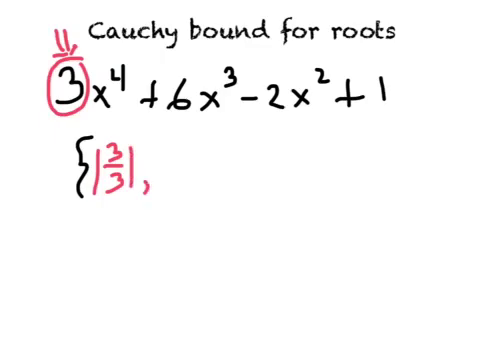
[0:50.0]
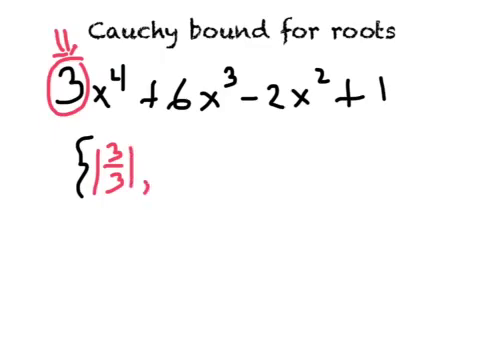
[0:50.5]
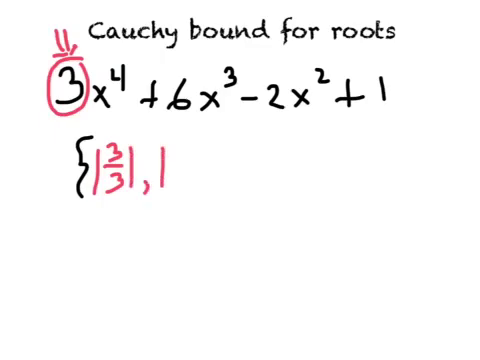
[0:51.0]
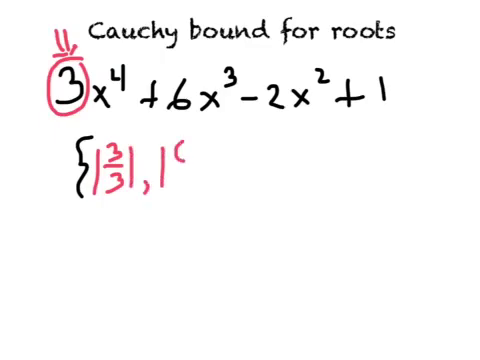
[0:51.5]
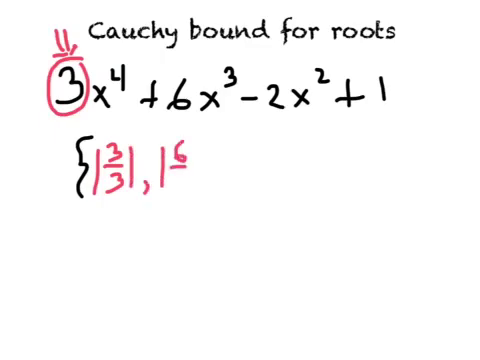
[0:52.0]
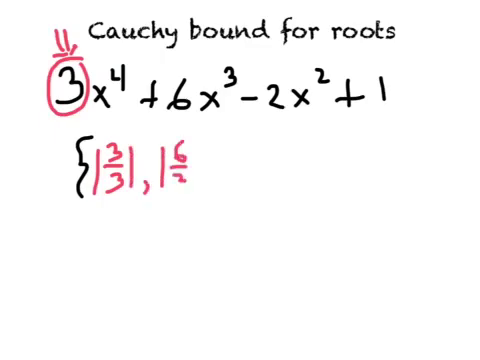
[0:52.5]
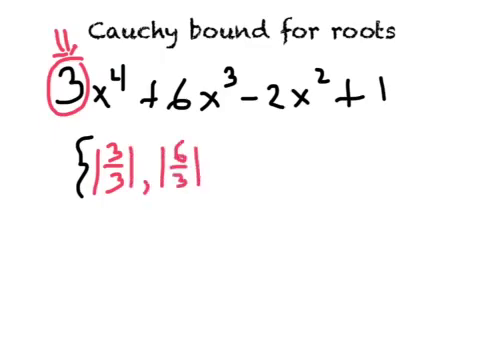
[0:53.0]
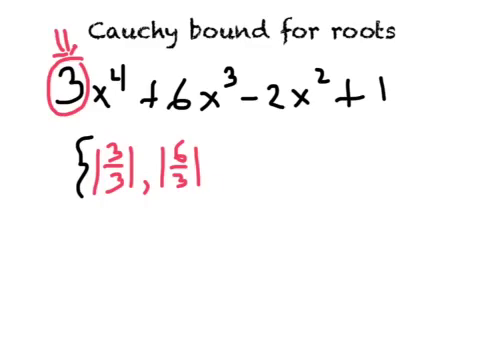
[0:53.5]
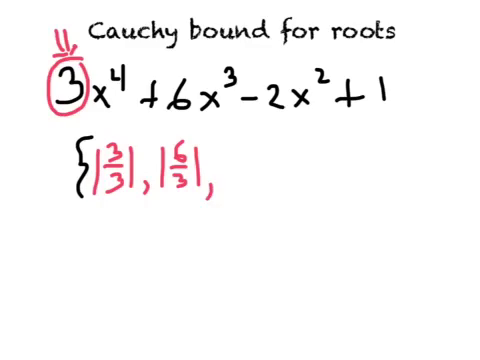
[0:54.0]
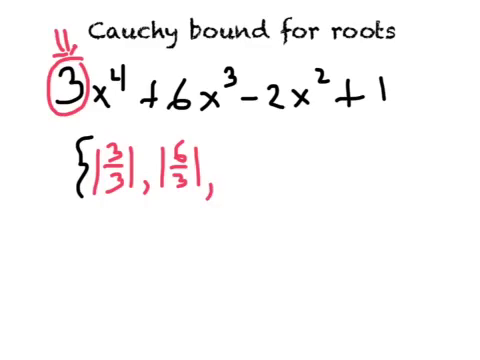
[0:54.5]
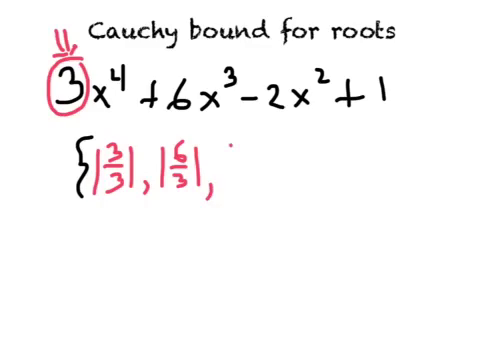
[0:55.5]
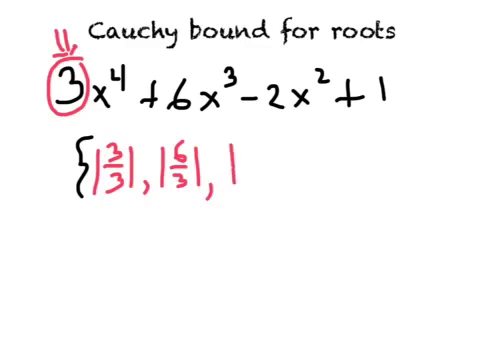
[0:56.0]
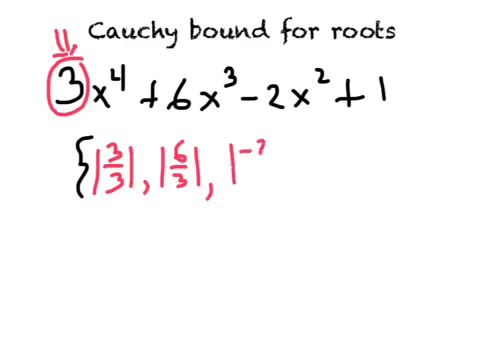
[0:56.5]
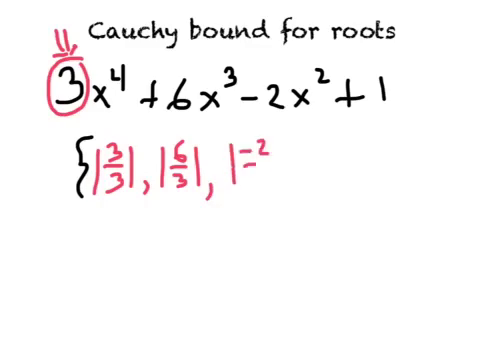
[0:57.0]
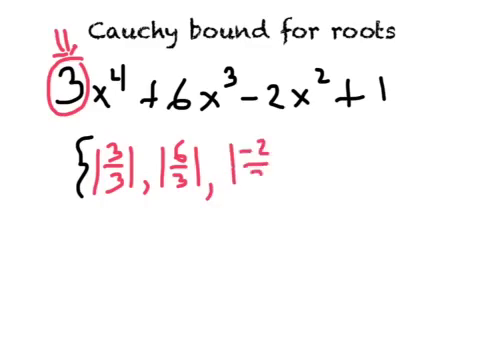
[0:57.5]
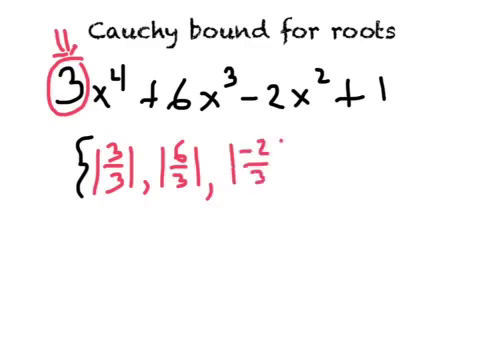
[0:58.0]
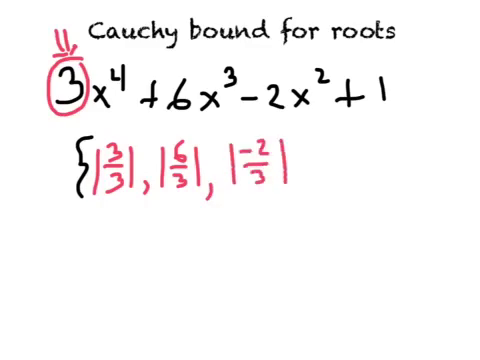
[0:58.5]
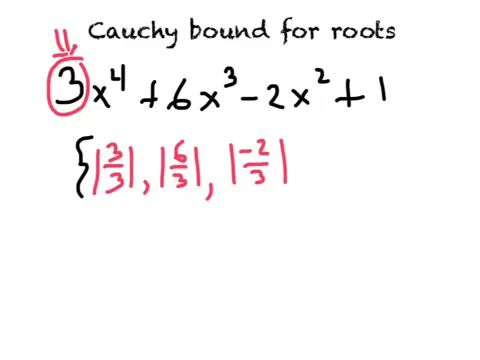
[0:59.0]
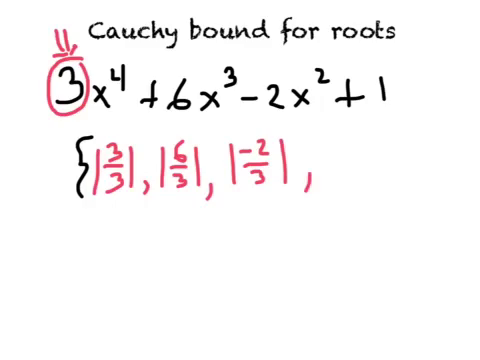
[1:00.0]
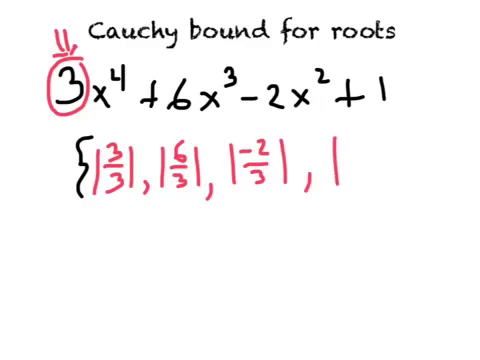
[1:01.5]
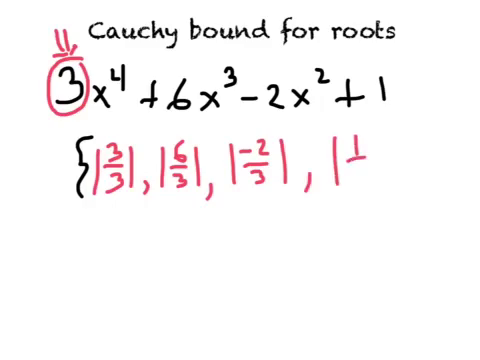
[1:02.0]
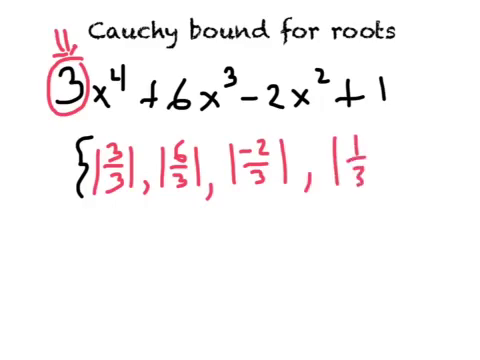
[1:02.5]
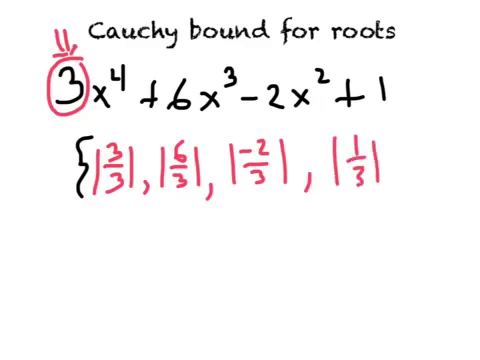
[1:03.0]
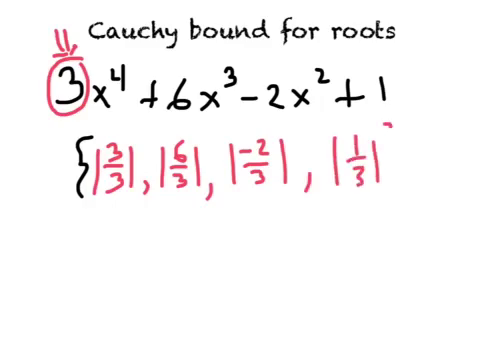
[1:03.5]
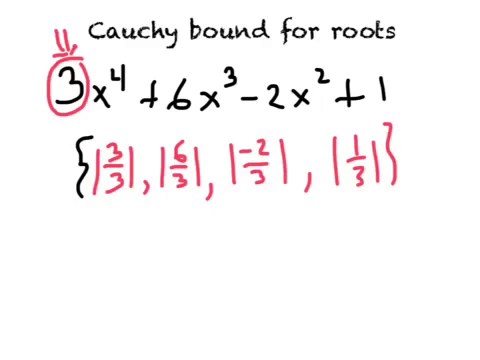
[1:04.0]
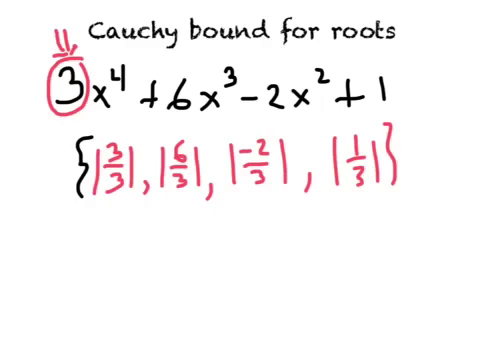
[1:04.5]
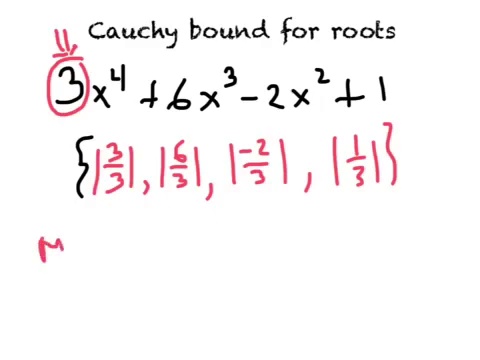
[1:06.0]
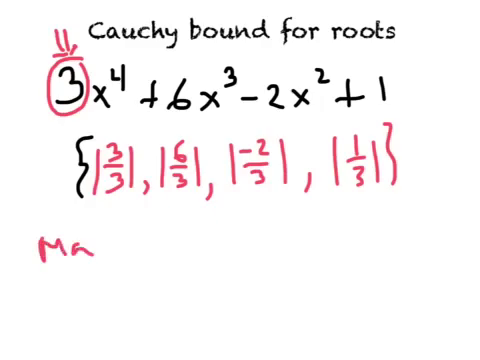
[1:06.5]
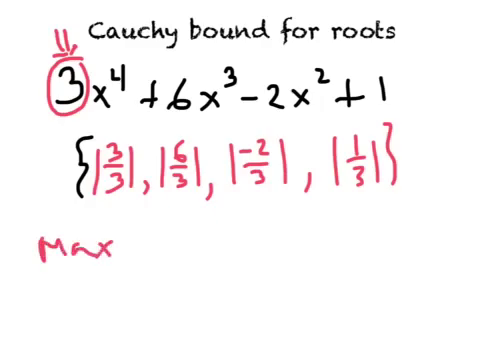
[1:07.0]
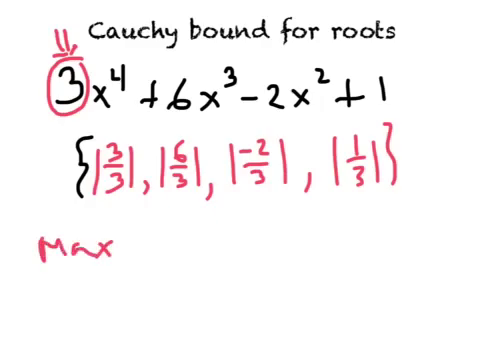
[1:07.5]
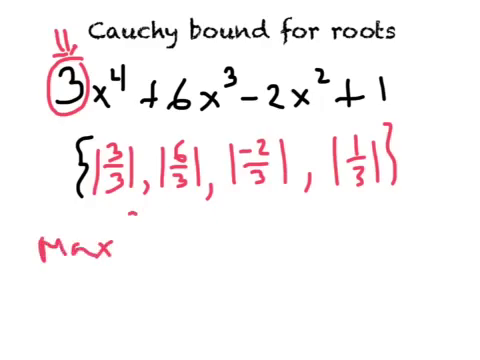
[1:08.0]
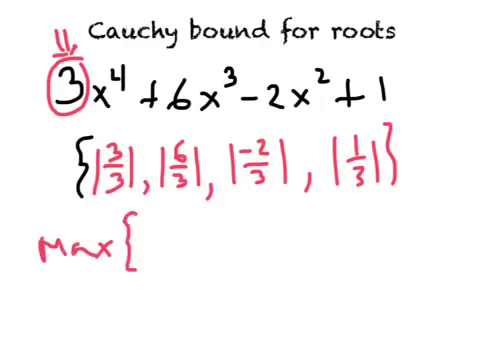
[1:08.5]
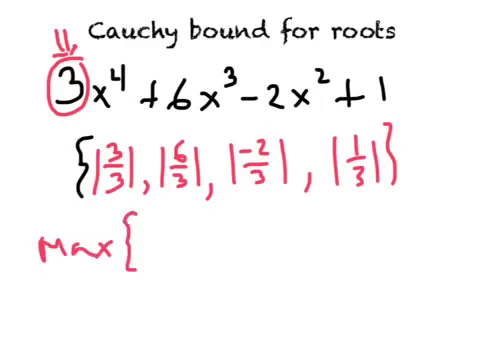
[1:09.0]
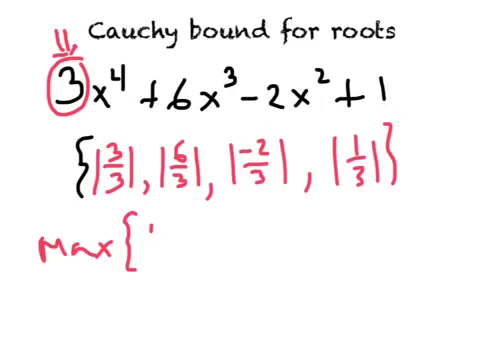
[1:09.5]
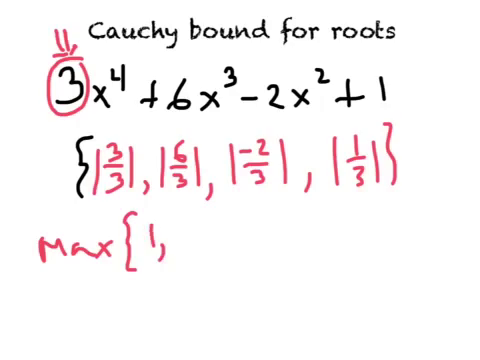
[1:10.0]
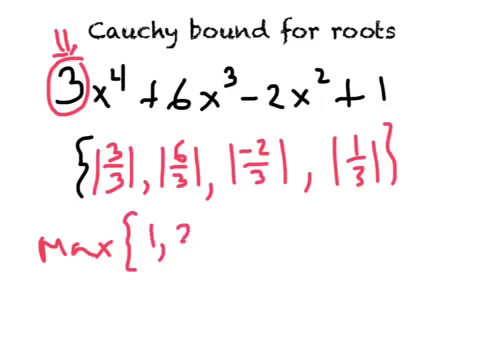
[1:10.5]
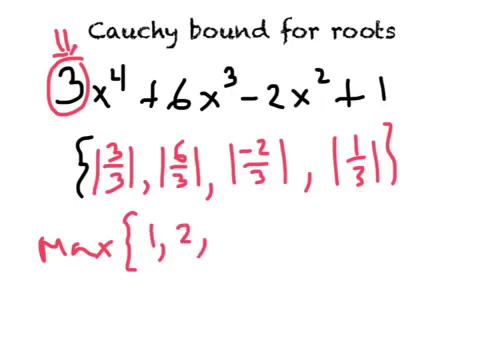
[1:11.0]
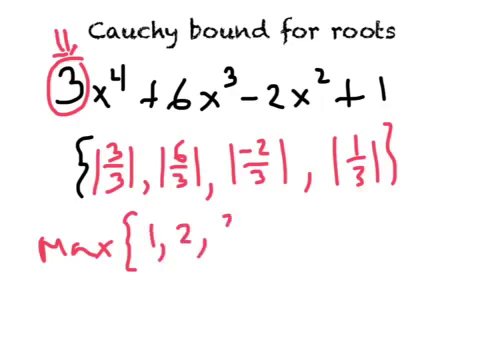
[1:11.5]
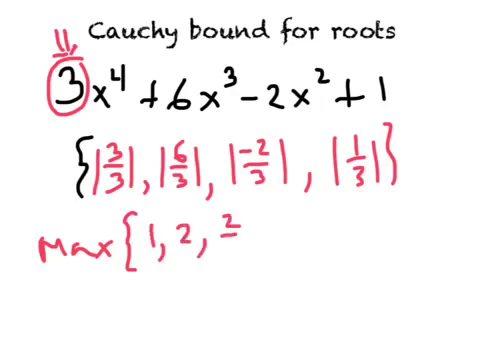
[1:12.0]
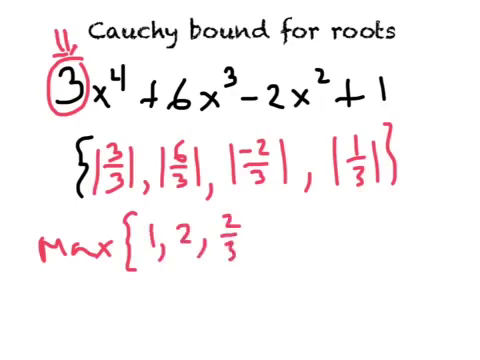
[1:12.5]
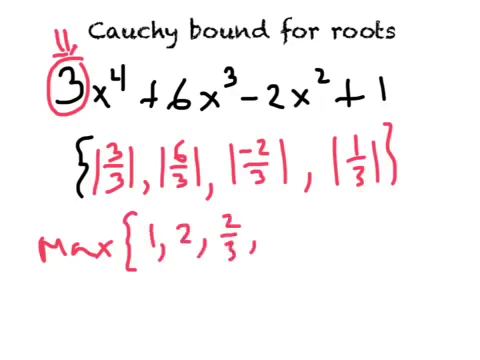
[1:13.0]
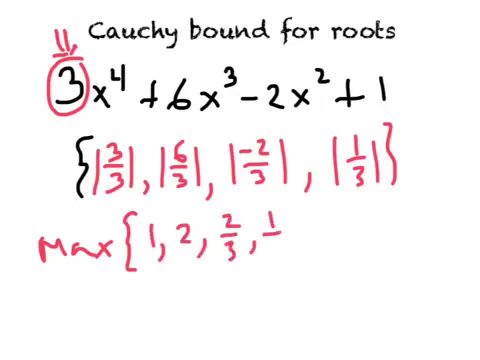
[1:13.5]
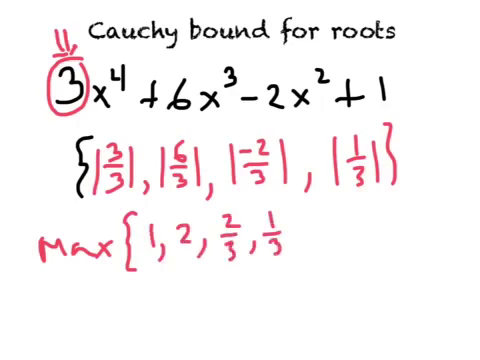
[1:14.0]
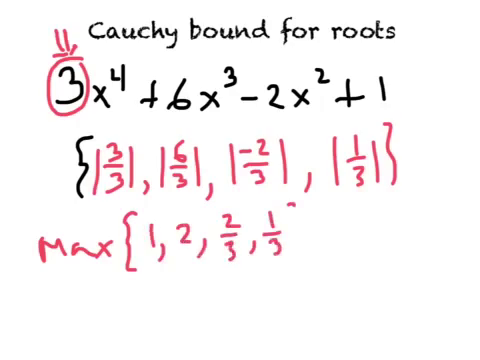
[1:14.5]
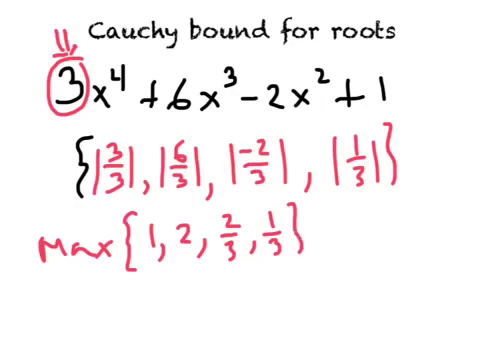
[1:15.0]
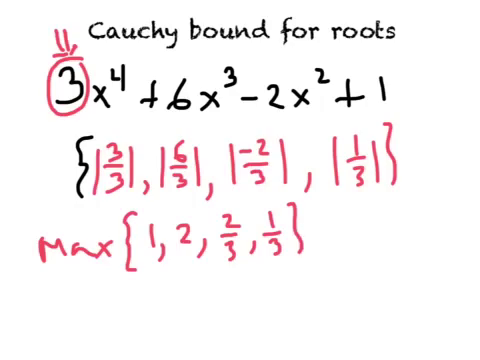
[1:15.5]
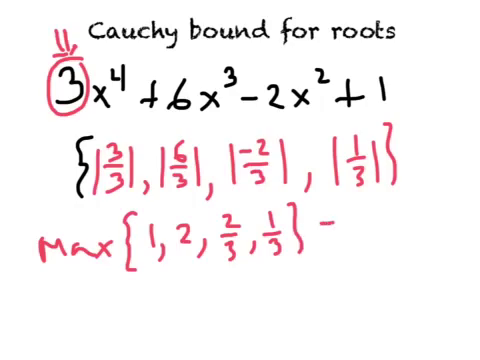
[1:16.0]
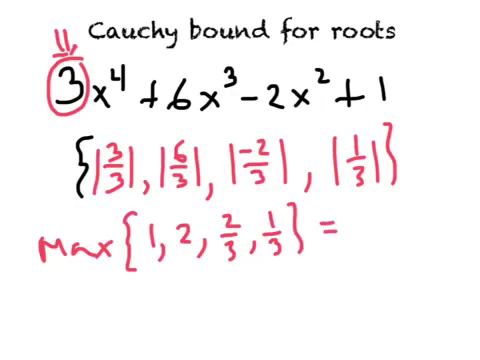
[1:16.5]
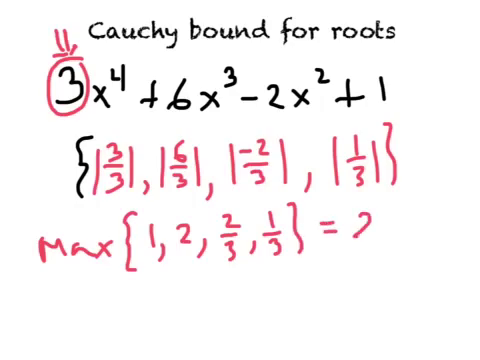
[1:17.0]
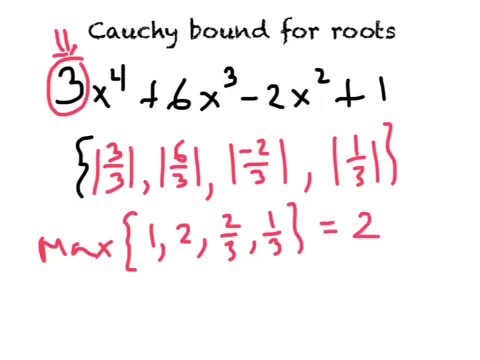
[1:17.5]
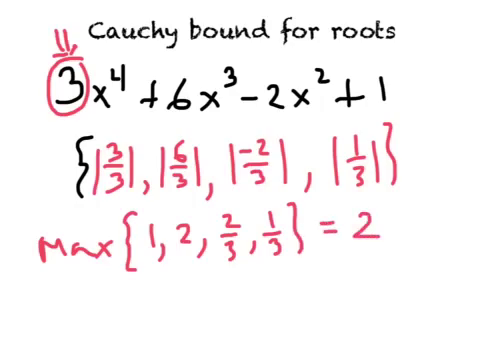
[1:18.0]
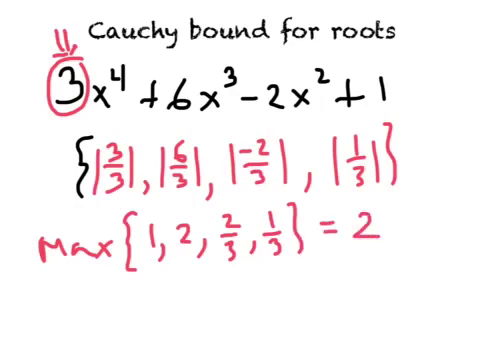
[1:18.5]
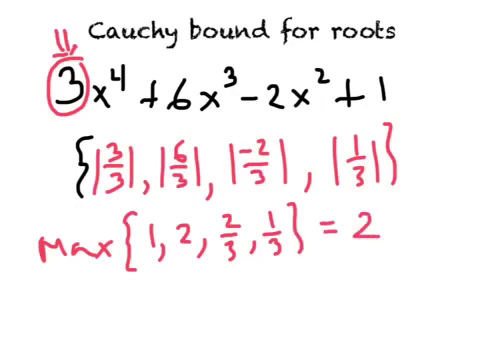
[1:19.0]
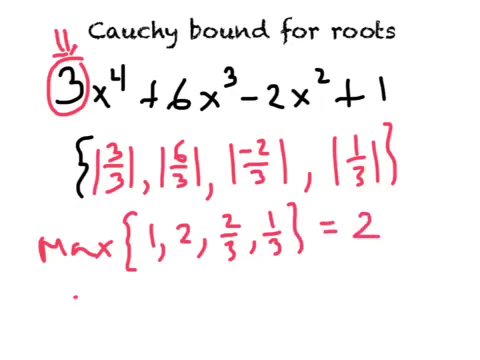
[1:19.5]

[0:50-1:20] The title "Cauchy bound for roots" is at the top, with the problem 3x^4 + 6x^3 − 2x^2 + 1 underneath. A red circle is drawn around the 3 in the problem, with what looks like an arrow above it pointing toward it. Writing then continues on the following line: a black opening curly bracket, followed by 3 over 3 surrounded by straight lines indicating absolute value, then a comma and |6/3|, a comma and |−2/3|, a comma and |1/3|, and a closing curly brace. Everything on this line is written in red except the opening curly brace, which is black.